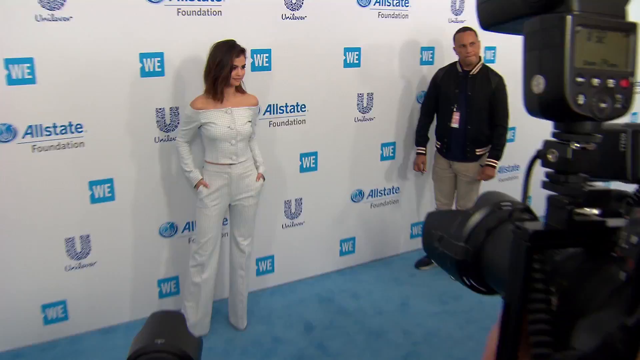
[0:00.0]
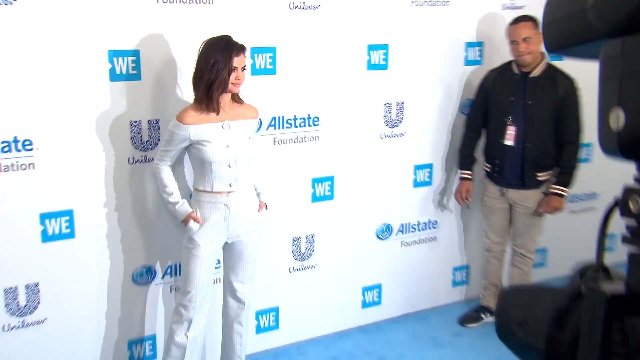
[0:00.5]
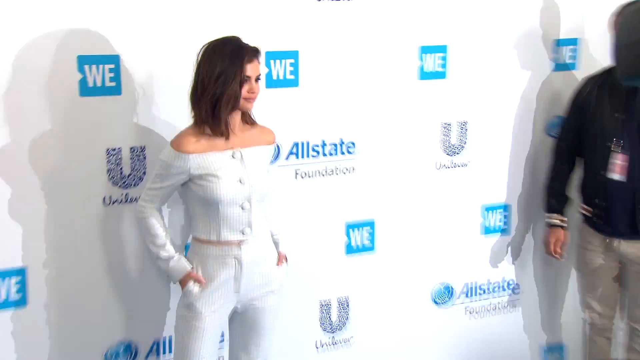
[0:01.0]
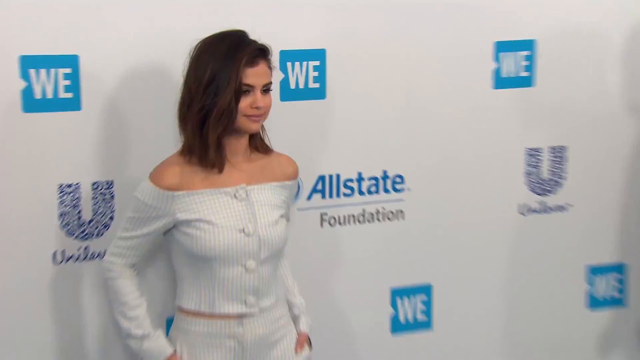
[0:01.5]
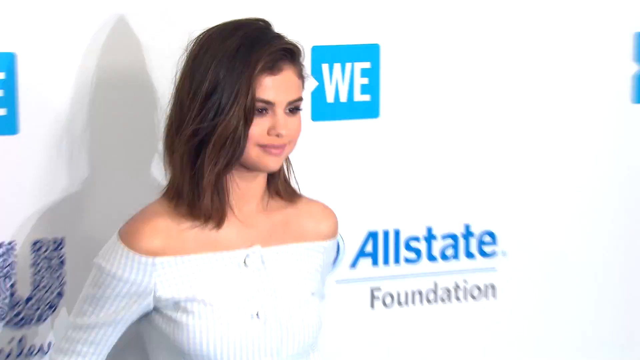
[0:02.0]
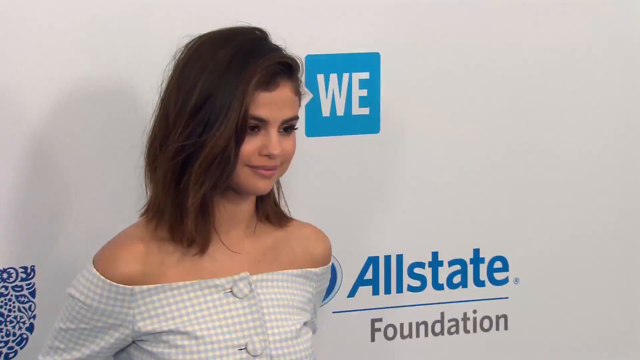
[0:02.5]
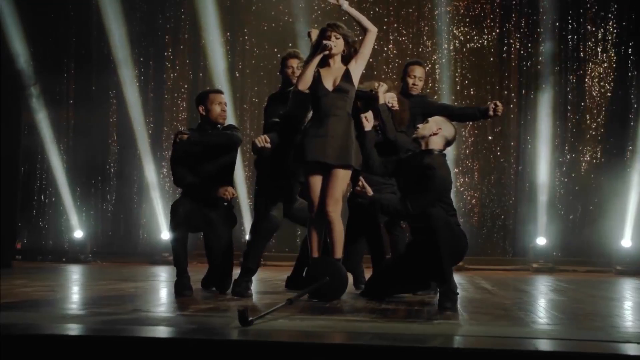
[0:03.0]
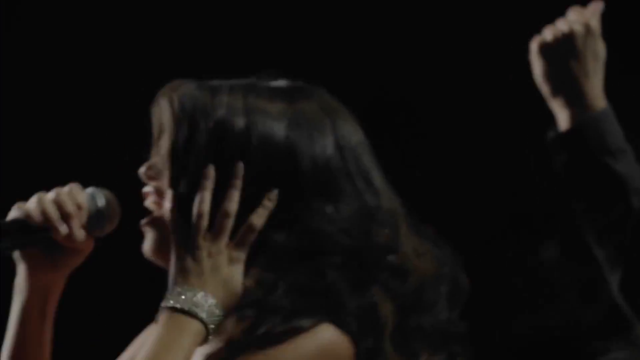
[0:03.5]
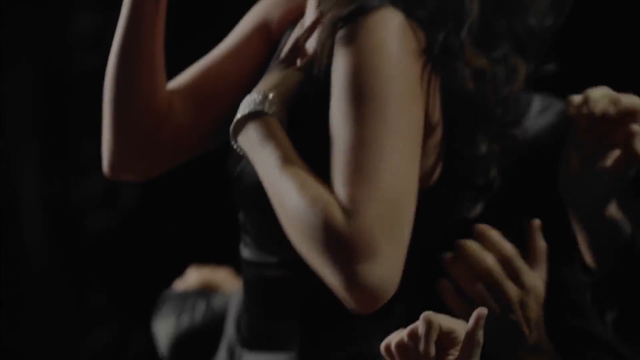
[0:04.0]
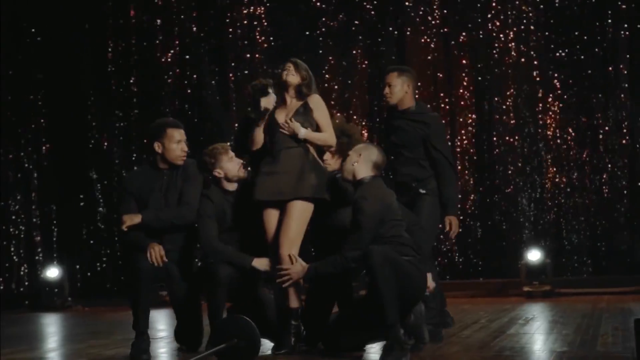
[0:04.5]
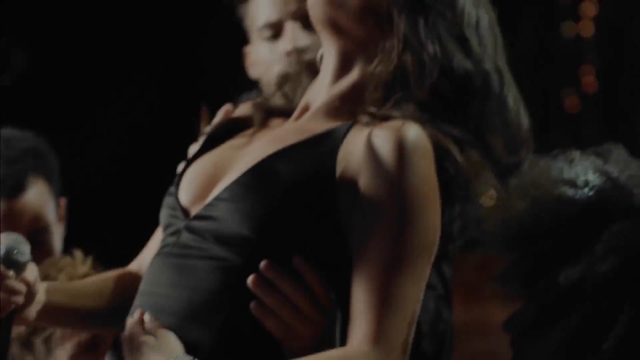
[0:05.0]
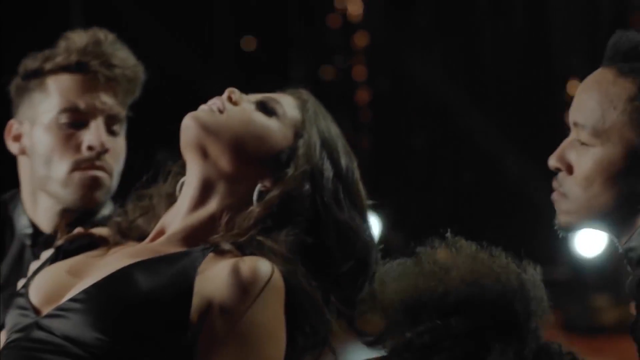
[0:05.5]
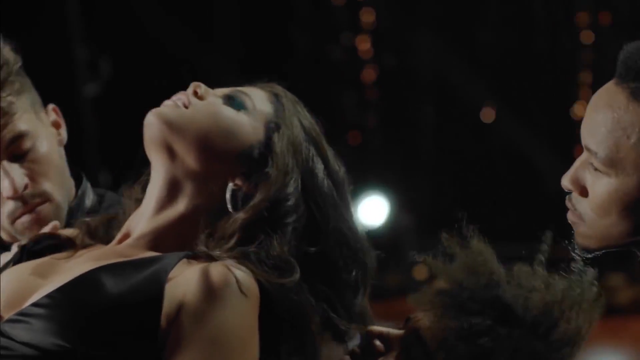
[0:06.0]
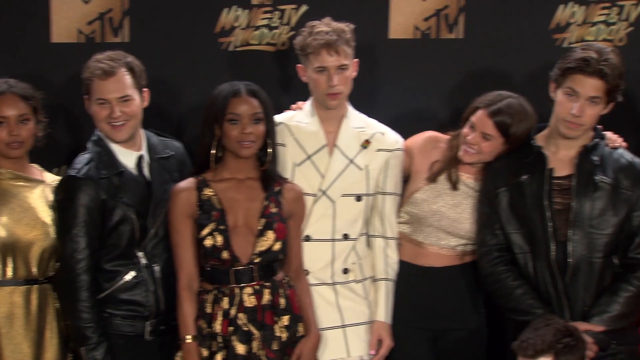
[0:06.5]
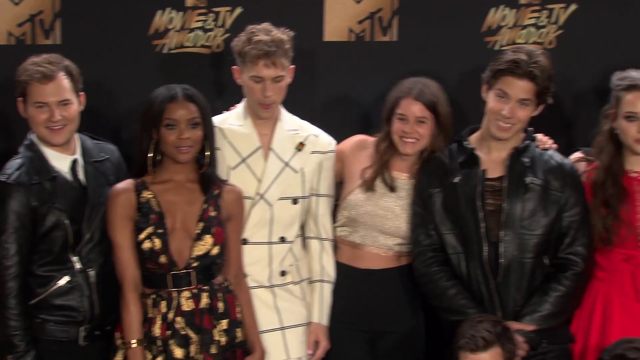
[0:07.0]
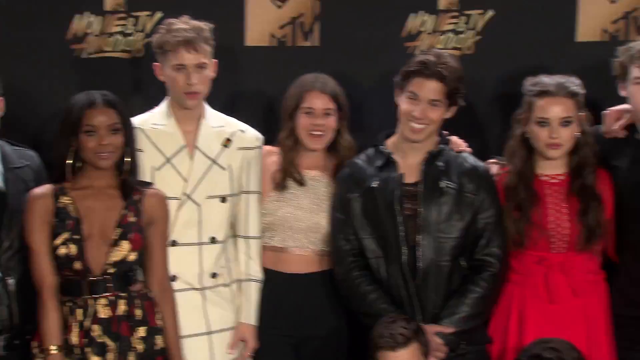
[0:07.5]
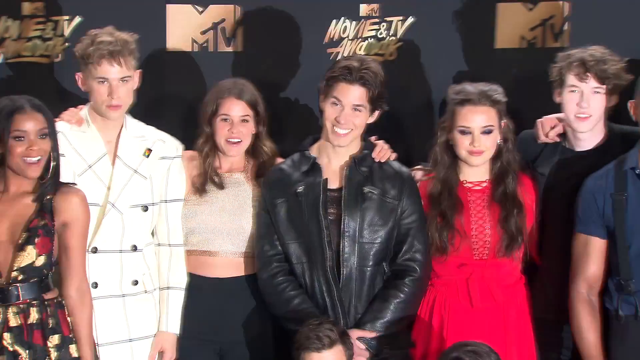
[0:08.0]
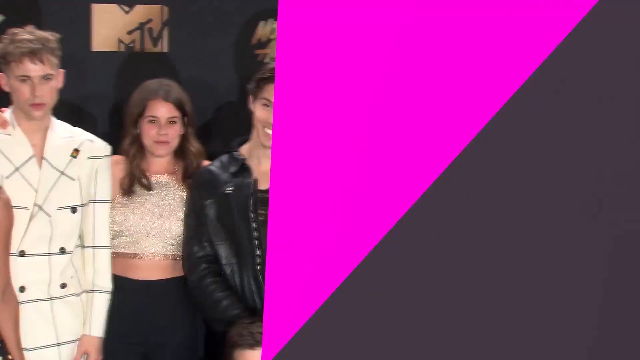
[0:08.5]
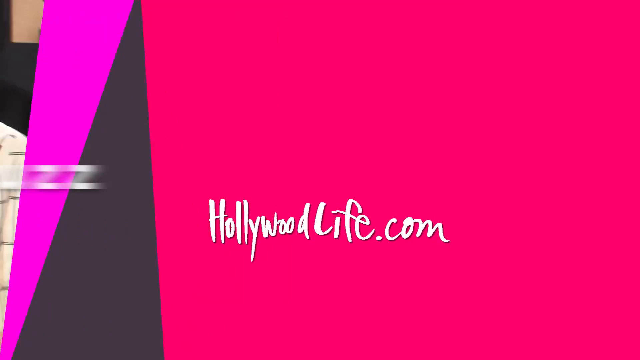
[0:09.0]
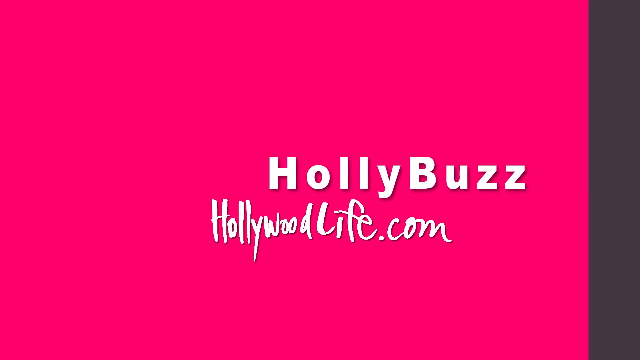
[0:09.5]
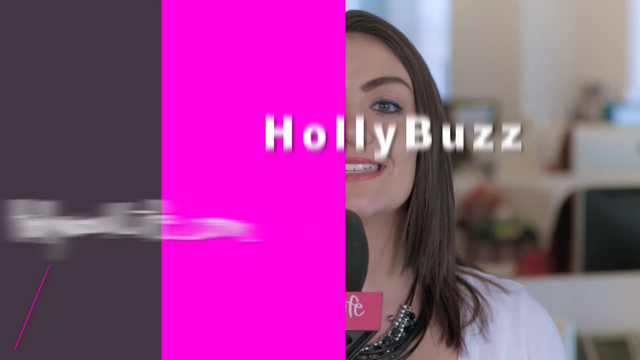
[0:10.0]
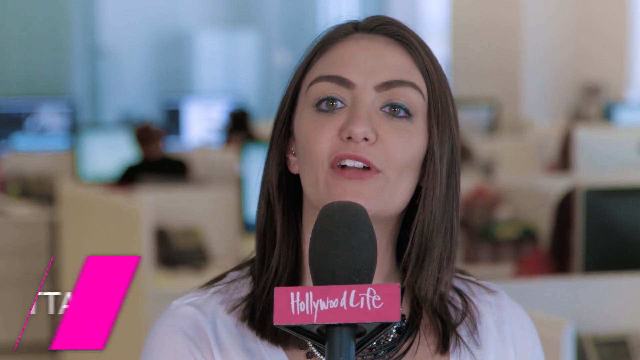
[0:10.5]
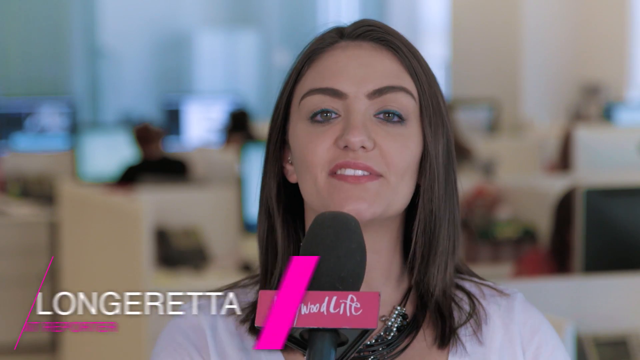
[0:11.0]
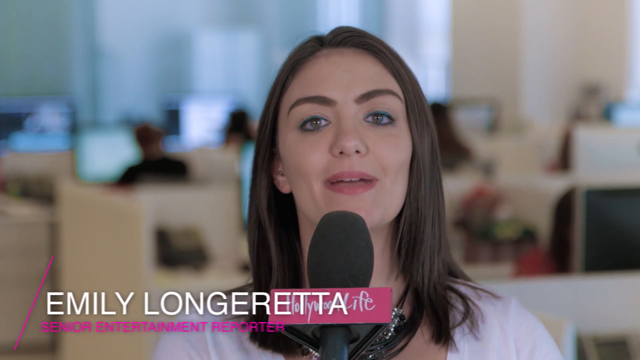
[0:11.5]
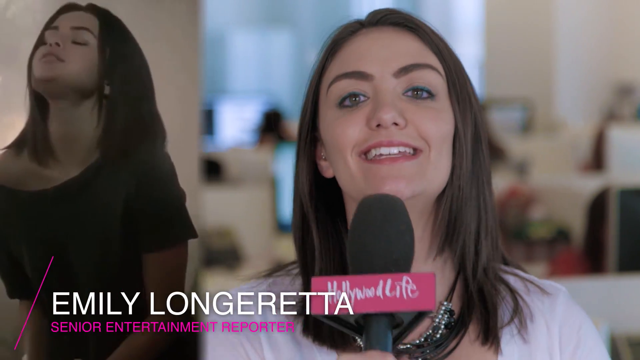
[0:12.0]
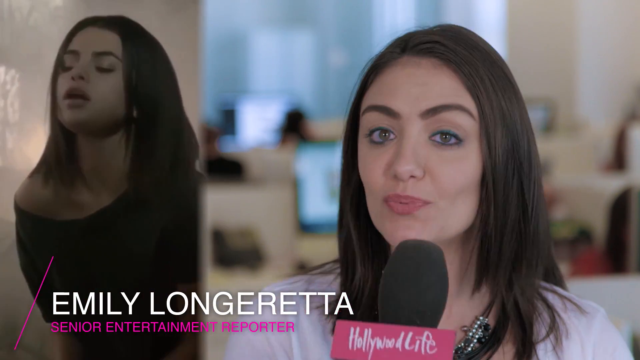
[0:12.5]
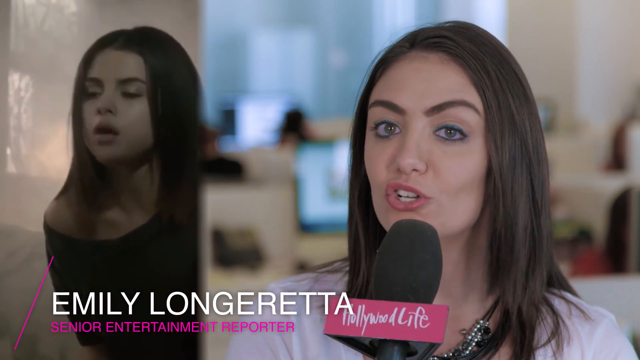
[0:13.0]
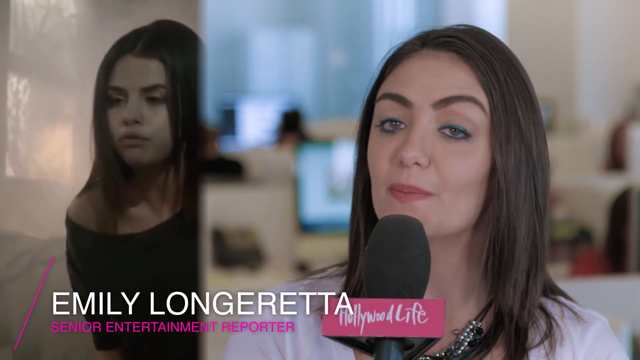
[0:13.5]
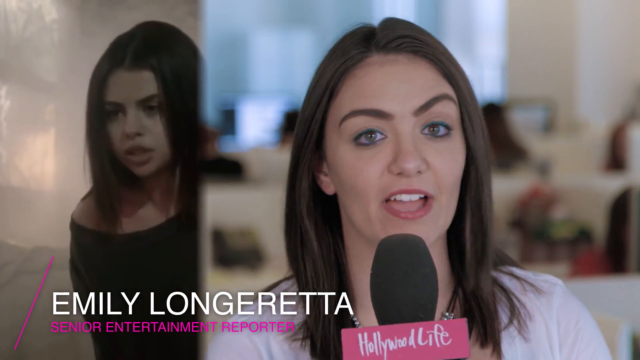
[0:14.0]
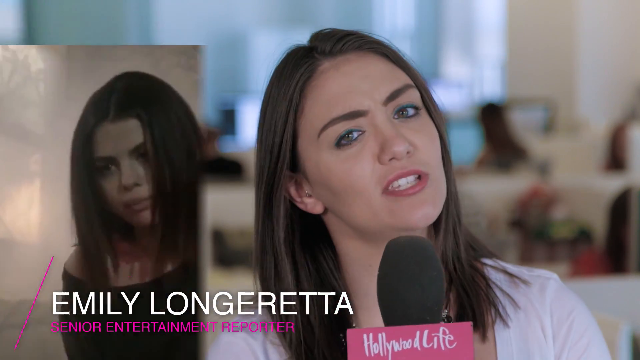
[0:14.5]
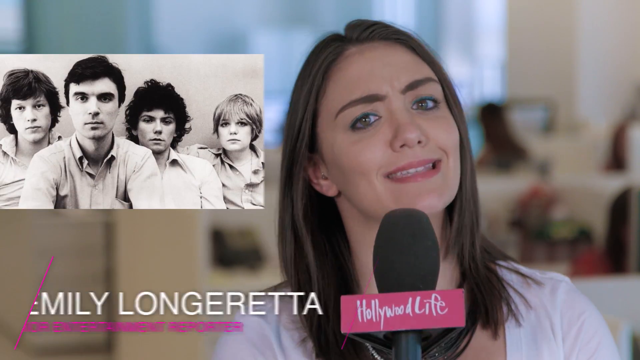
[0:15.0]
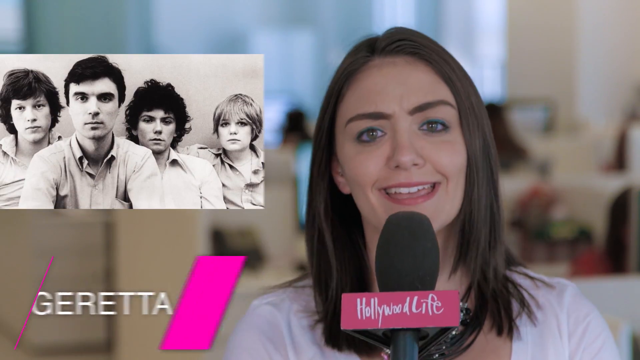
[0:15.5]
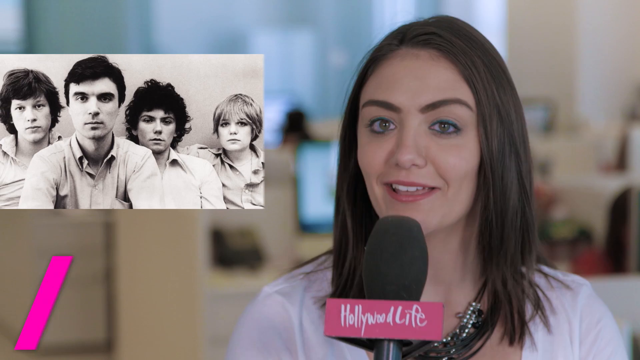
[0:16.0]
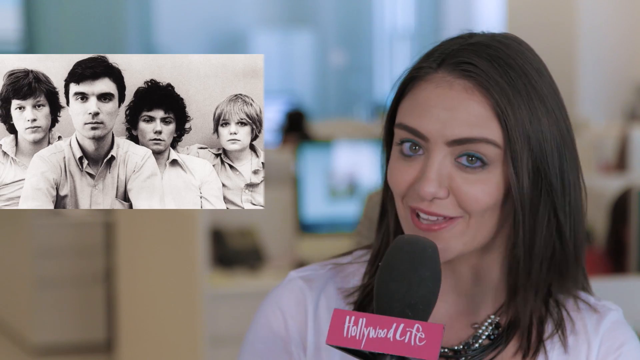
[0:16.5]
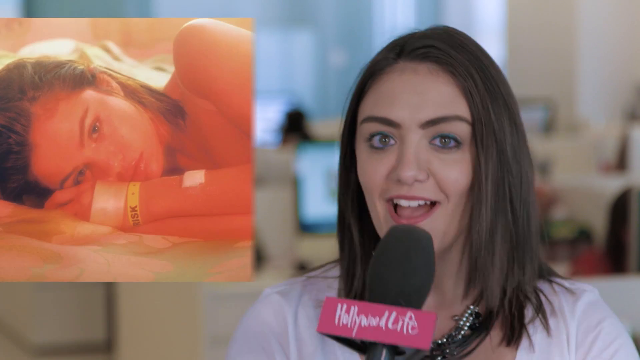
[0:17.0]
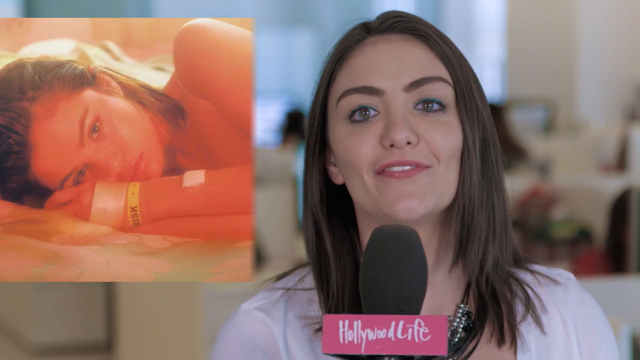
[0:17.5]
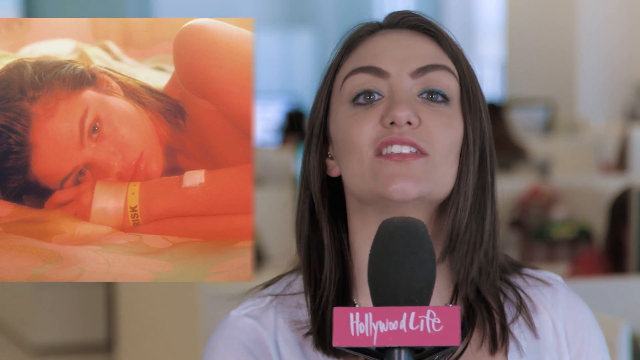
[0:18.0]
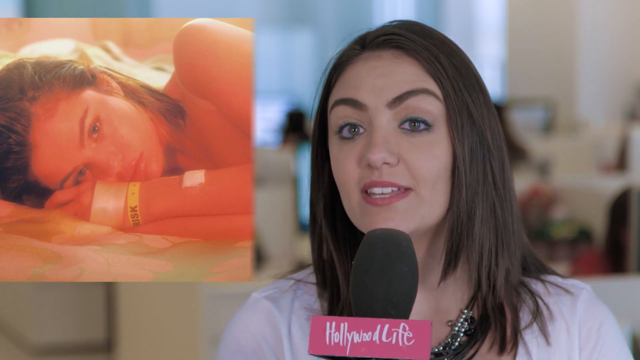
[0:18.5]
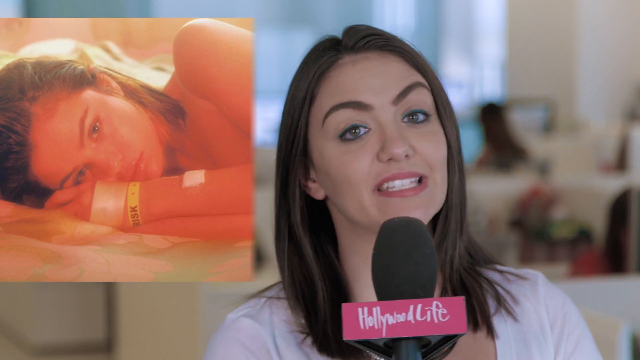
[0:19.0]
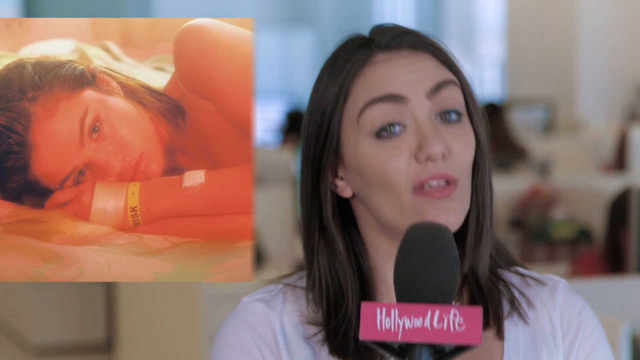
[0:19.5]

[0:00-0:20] A title at the top reads "Selena Gomez dissed by 13 reasons" followed by an ellipsis, so the end of the title is not visible. The video opens on Selena Gomez at some sort of photo shoot in front of a promotional banner; she wears a white kind of outfit and lots of makeup. It then shows a segment of one of her music videos, with her dancing on a stage. Next it jumps to what looks like a cast at a photo shoot, apparently the cast of 13 Reasons Why. The scene then shifts to what seems to be a journalist holding a microphone, with text reading "Hollywood life" and her name, "Emily Longoretta", shown on screen. She speaks to the camera.